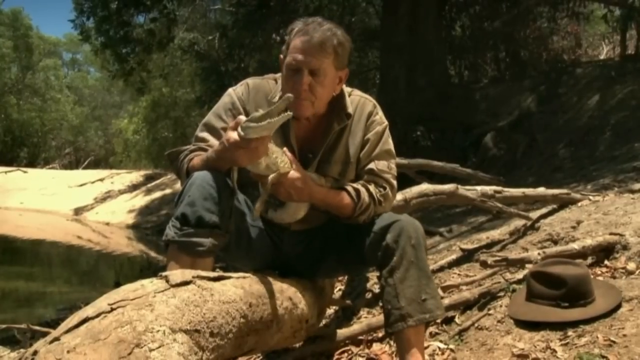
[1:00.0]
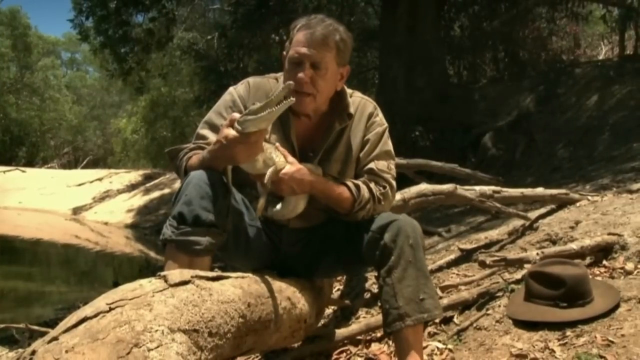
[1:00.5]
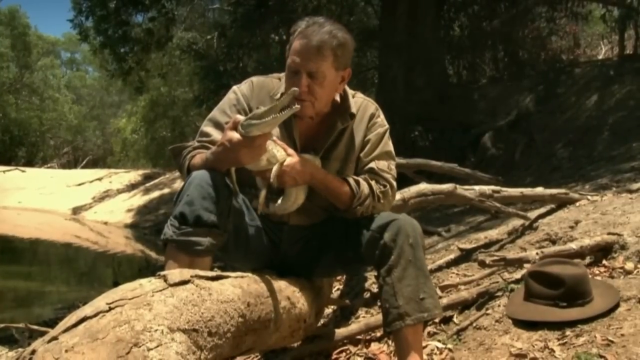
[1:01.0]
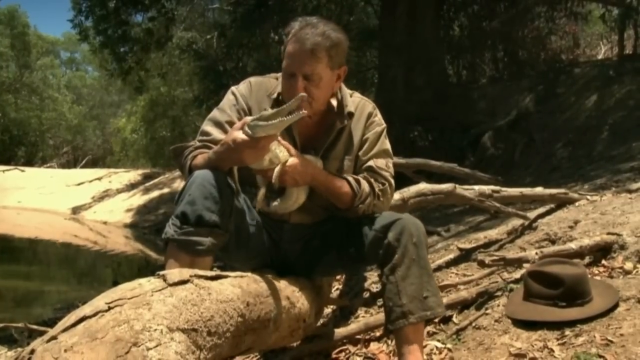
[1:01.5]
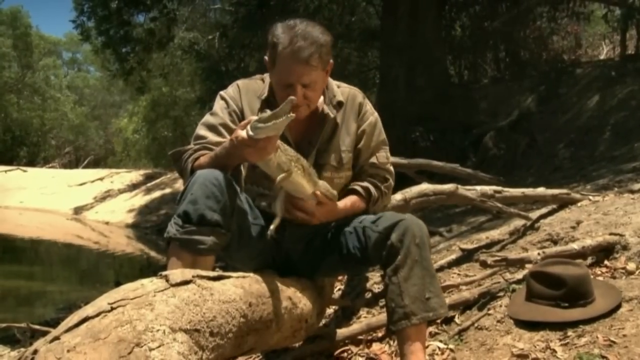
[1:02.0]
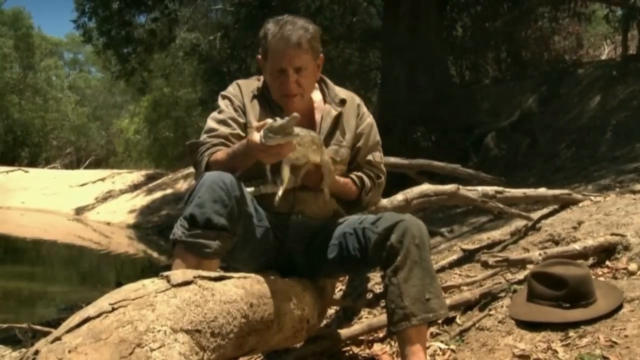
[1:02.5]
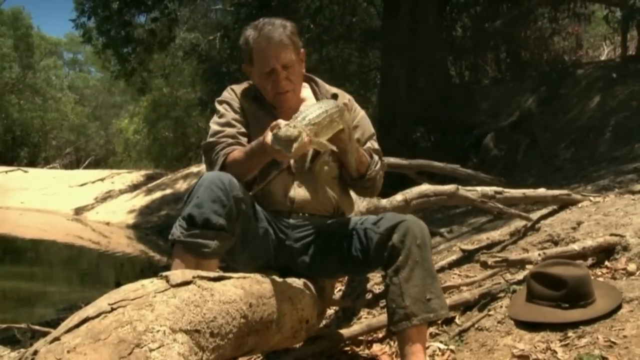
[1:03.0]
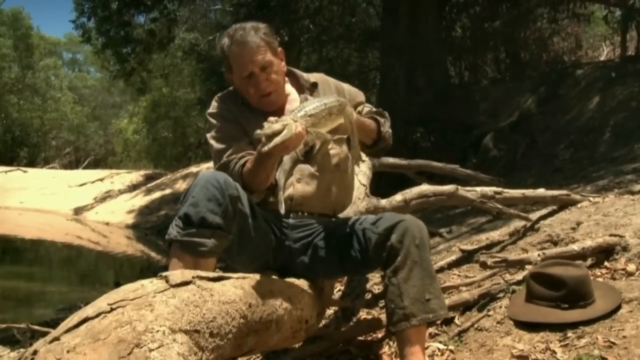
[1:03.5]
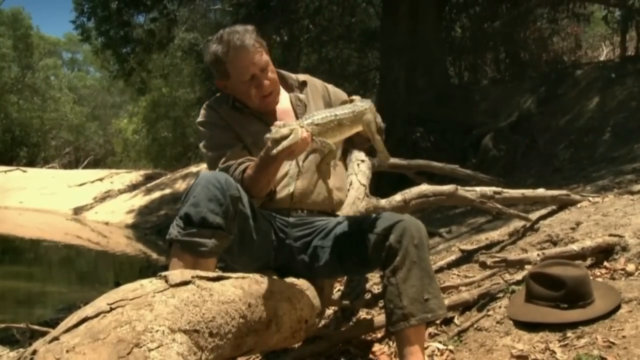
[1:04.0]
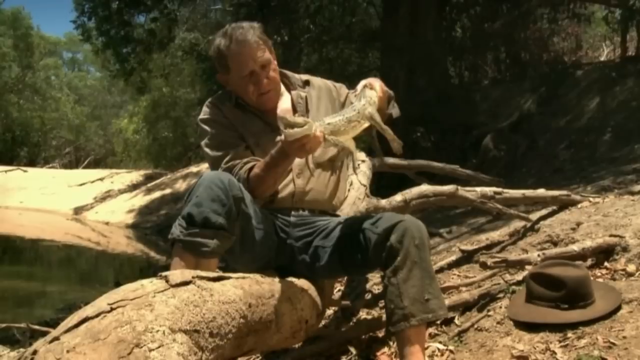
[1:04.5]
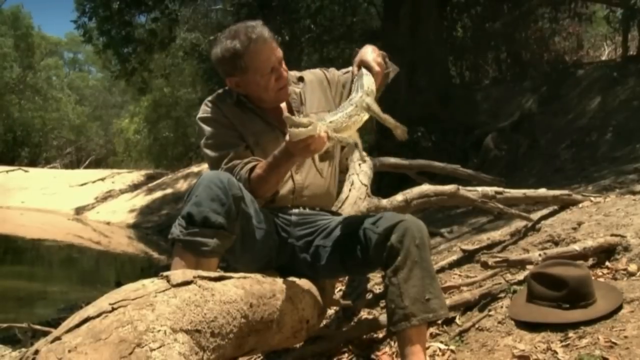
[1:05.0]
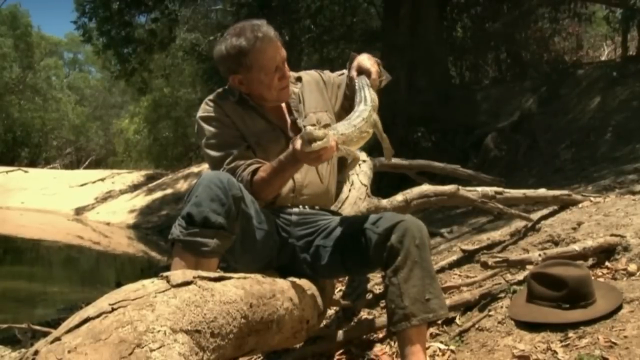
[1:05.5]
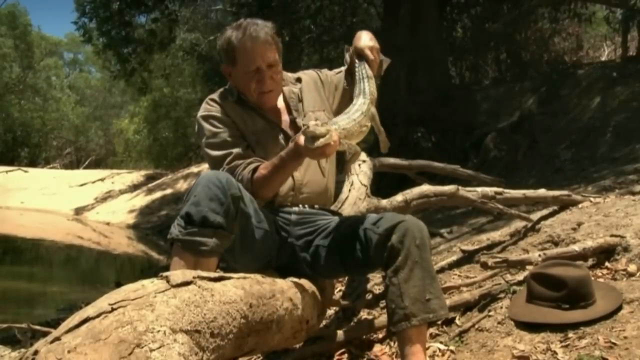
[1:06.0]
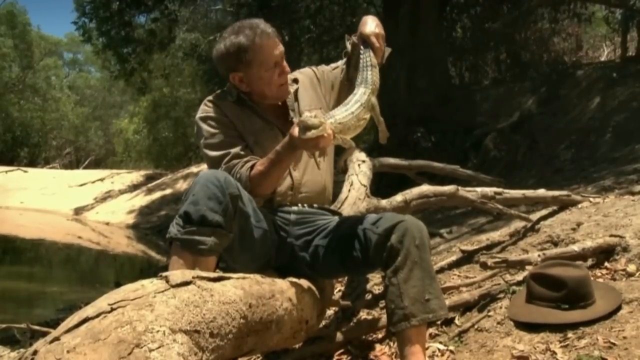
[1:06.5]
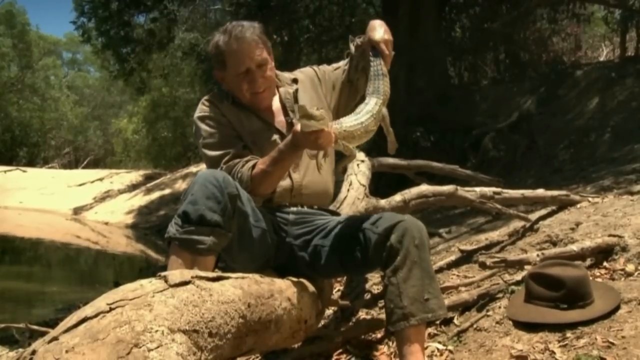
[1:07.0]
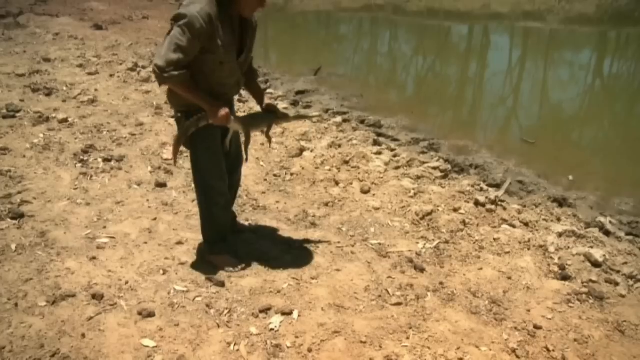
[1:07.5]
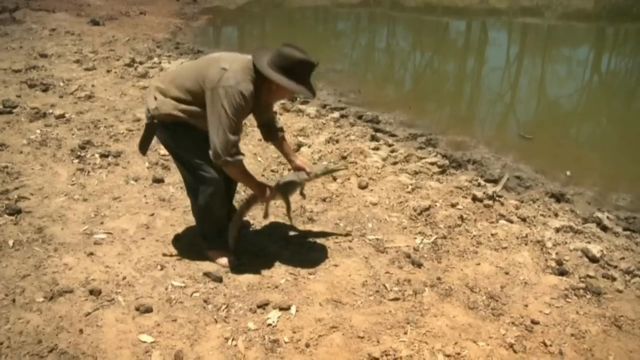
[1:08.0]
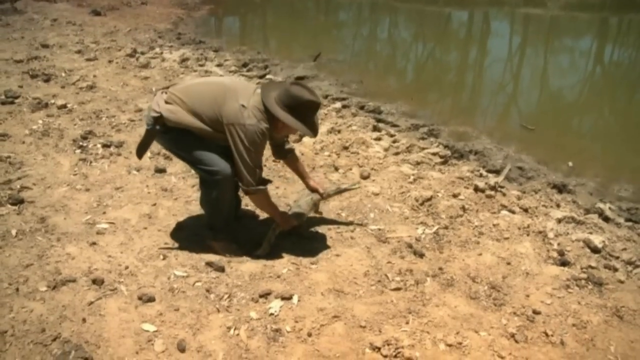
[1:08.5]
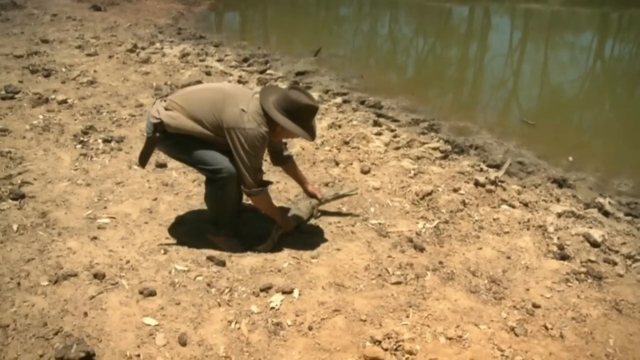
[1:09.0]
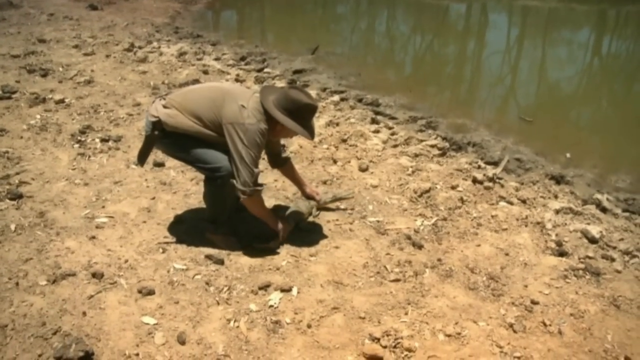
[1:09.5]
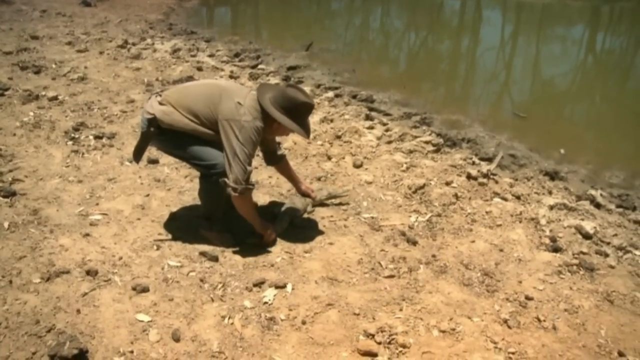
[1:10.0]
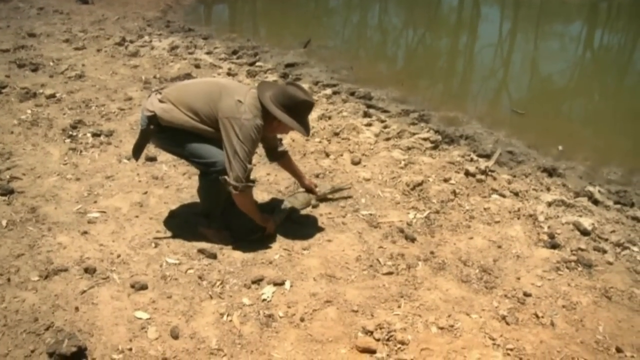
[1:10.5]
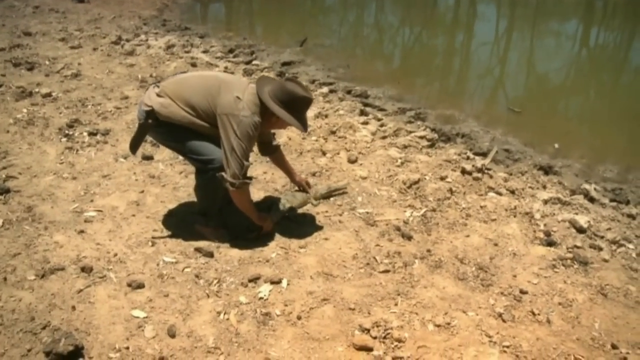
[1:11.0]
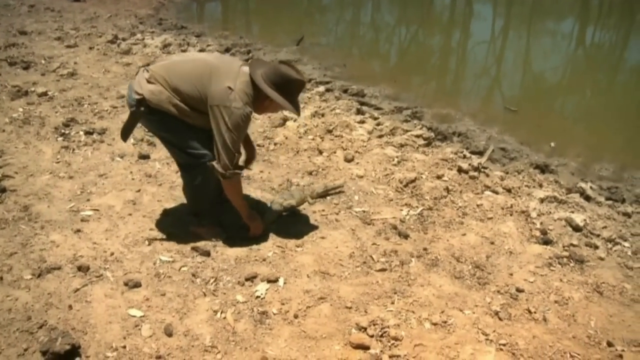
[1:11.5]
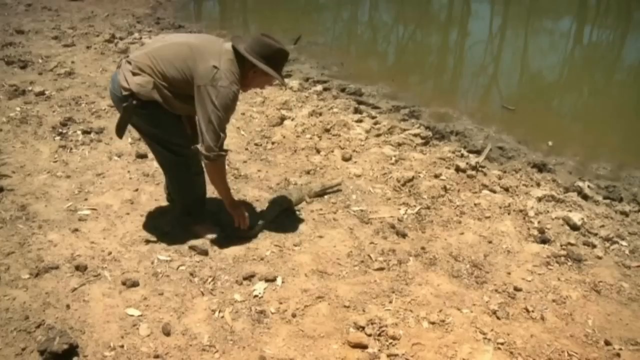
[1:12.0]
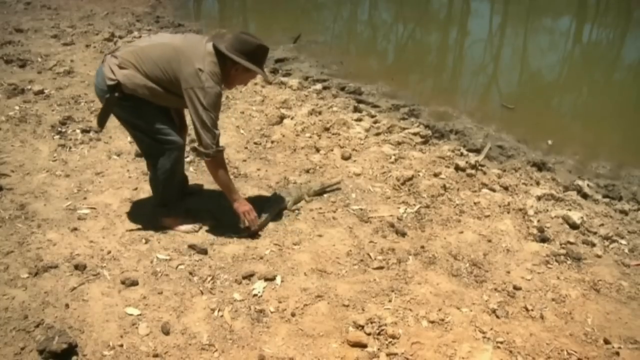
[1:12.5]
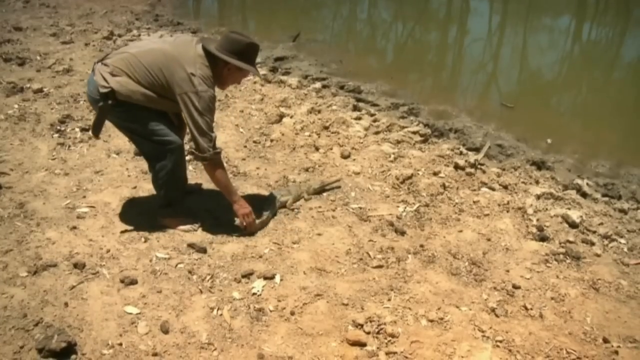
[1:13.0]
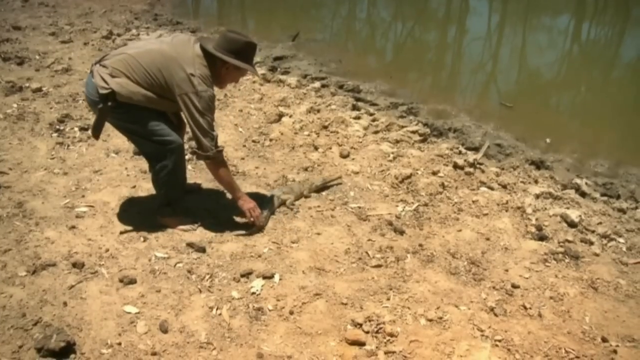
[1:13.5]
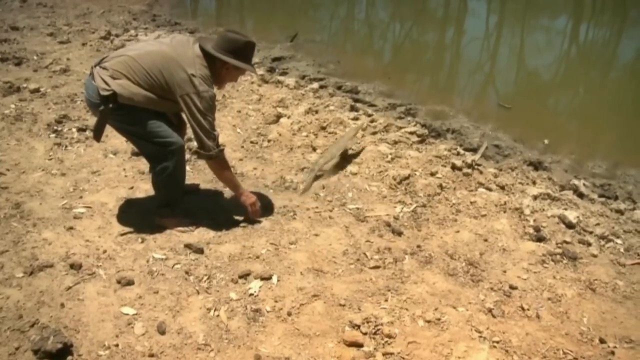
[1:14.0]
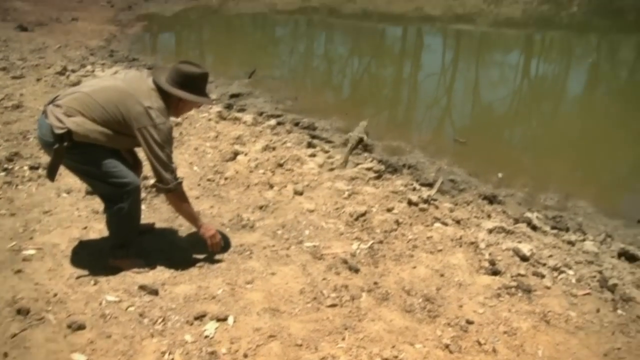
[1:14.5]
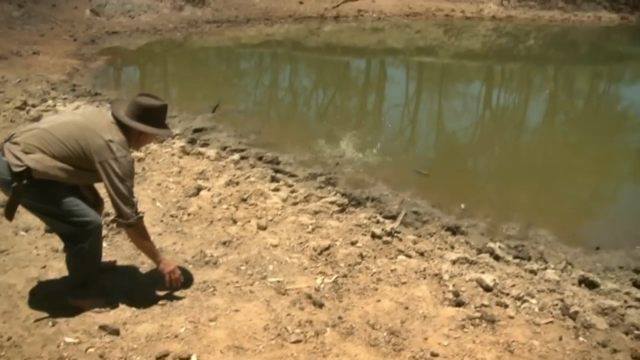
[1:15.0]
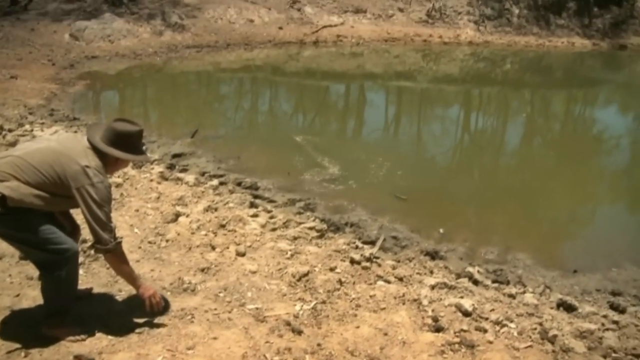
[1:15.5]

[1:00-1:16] The man is still examining the crocodile in his hand. The crocodile still has its mouth open, and the man still seems to be strangling it at its throat while holding its belly with his other hand, the left hand. Trees of the forest appear in the background. The man seems to be demonstrating as he keeps talking to the camera. He then seems to sort of lift the crocodile up by its tail. The video cuts to a different scene in which the man seems to now be wearing his hat. He brings the crocodile down on the ground and leaves it on the riverbank, and as he snaps its tail a little, the crocodile seems to quickly run into the water away from him. He seems to have something hanging on his hip, like a knife in its bag or satchel. The video ends with the crocodile running and swimming into the river.